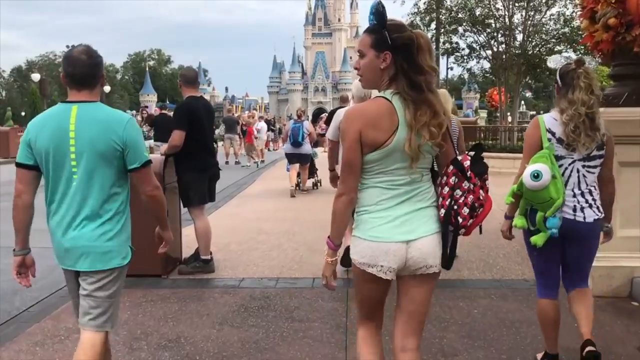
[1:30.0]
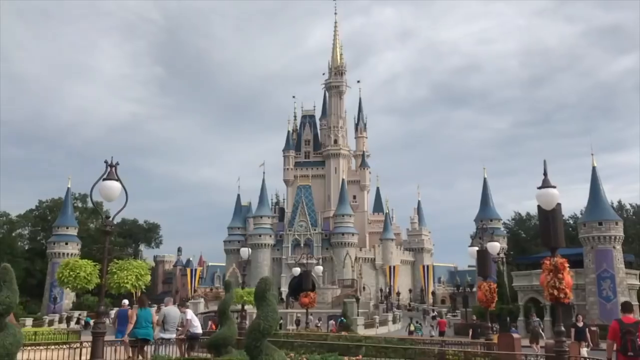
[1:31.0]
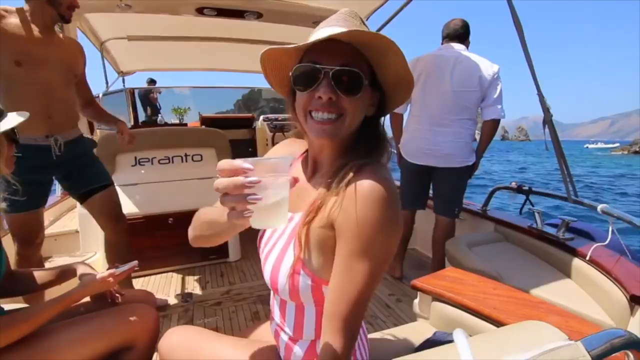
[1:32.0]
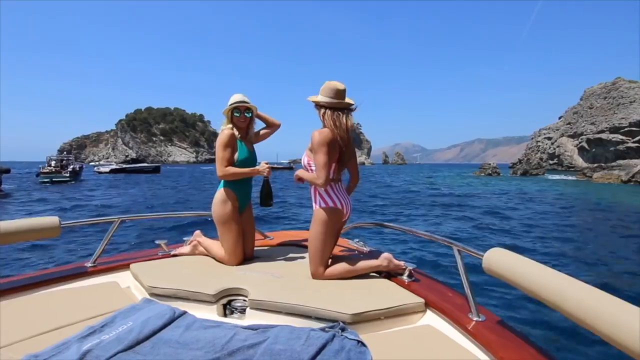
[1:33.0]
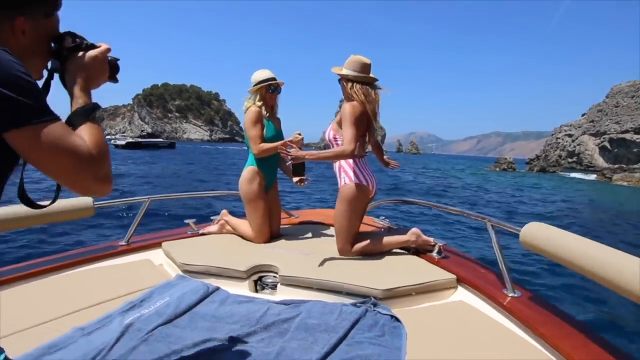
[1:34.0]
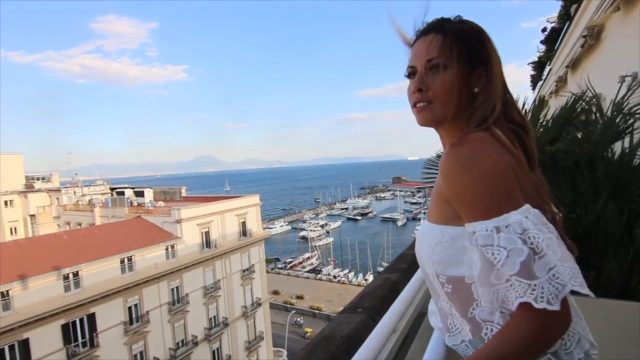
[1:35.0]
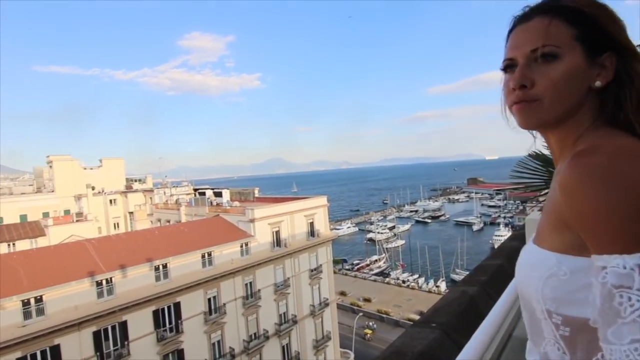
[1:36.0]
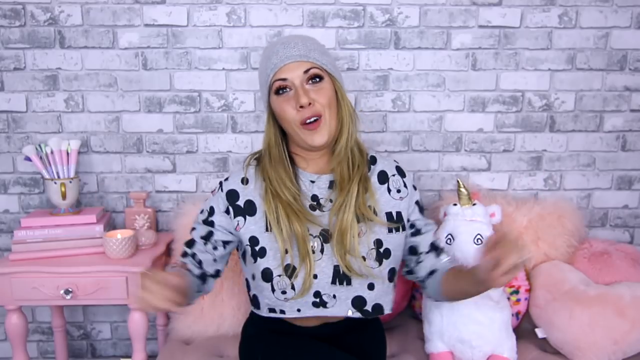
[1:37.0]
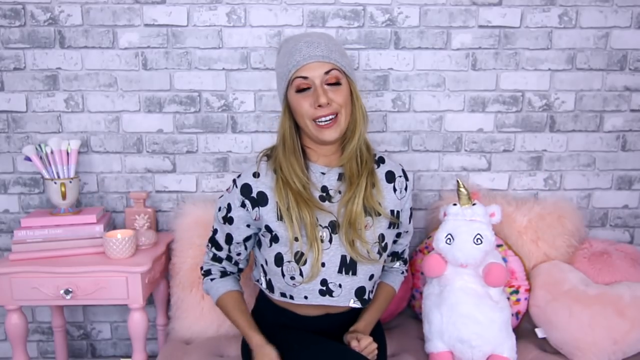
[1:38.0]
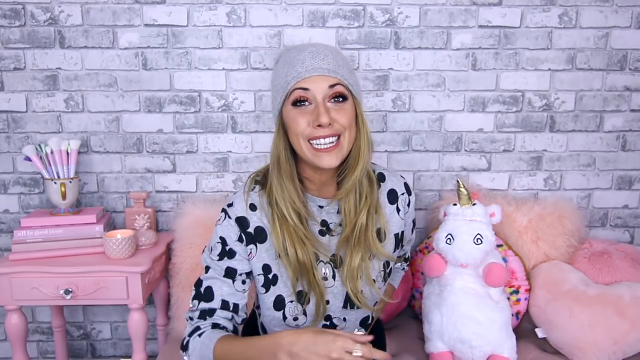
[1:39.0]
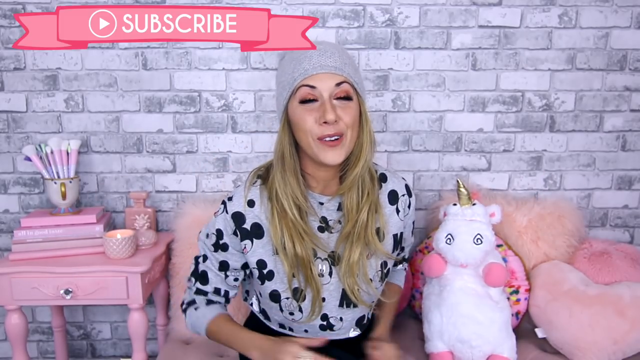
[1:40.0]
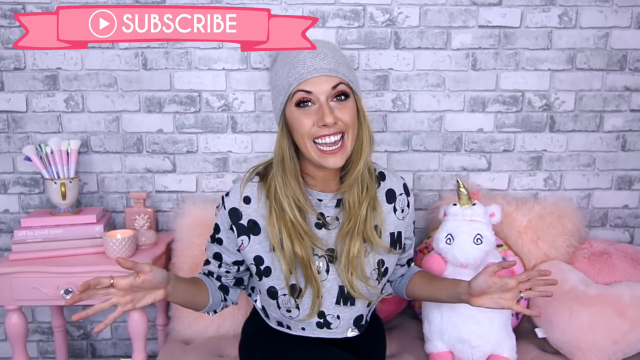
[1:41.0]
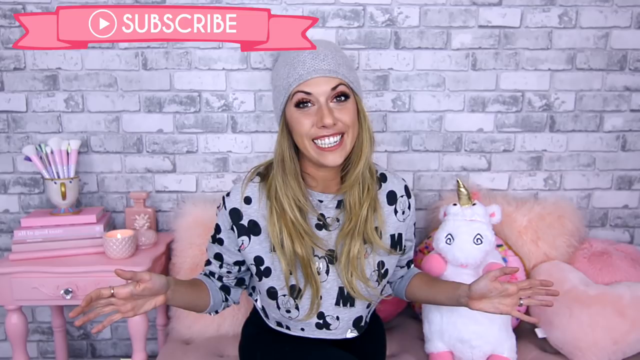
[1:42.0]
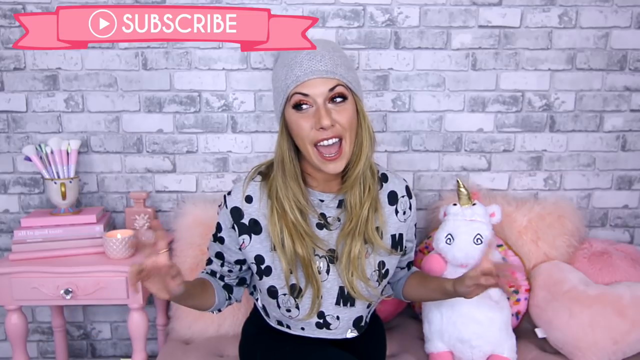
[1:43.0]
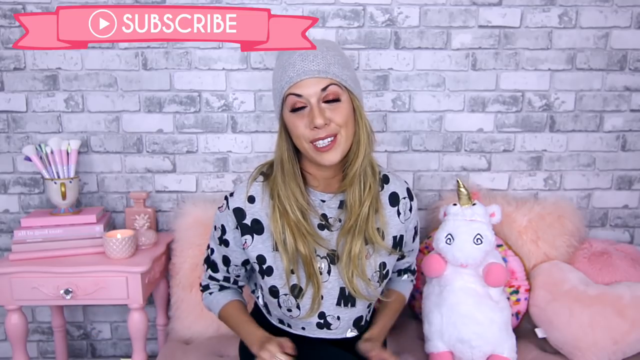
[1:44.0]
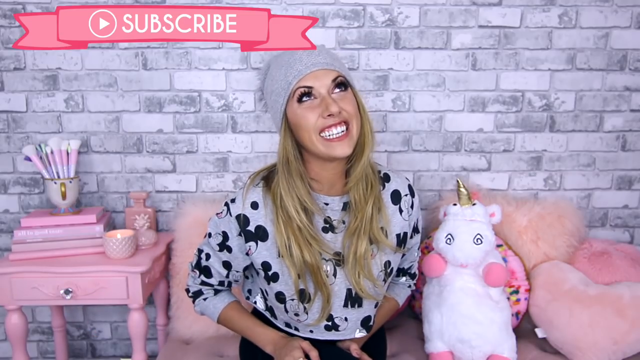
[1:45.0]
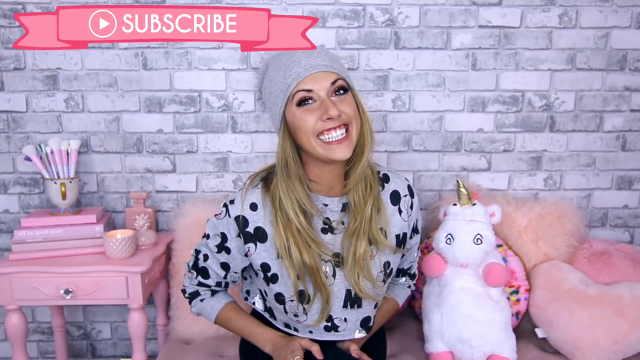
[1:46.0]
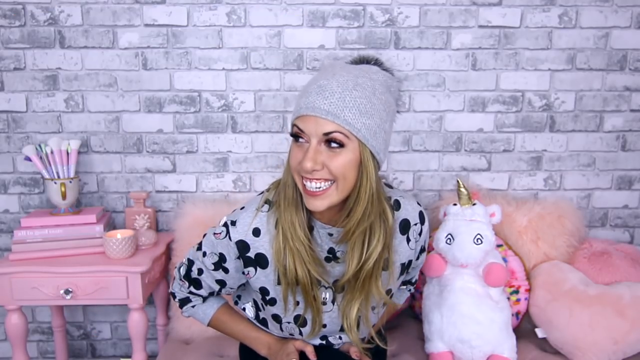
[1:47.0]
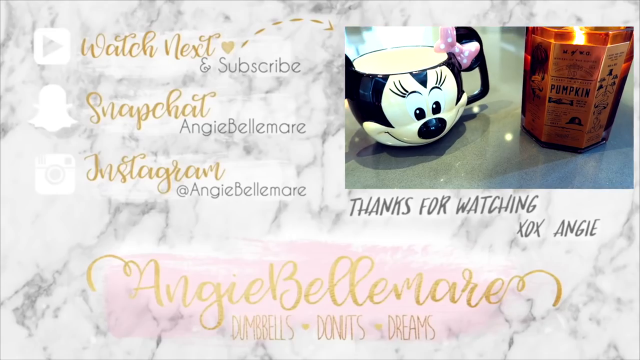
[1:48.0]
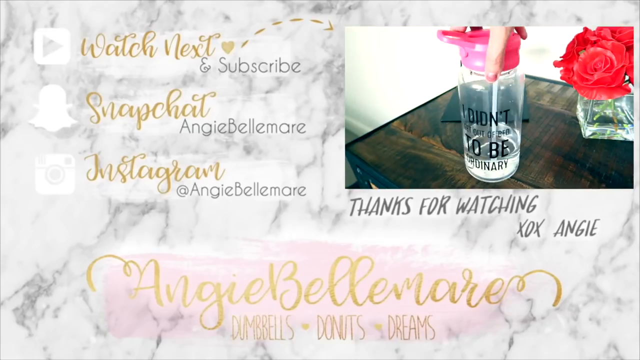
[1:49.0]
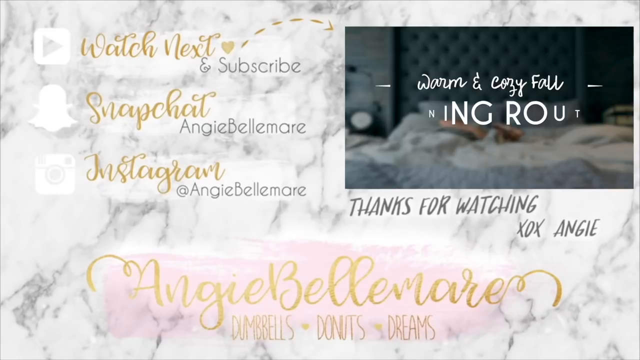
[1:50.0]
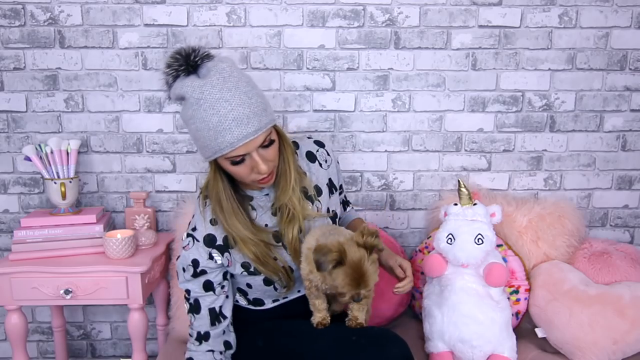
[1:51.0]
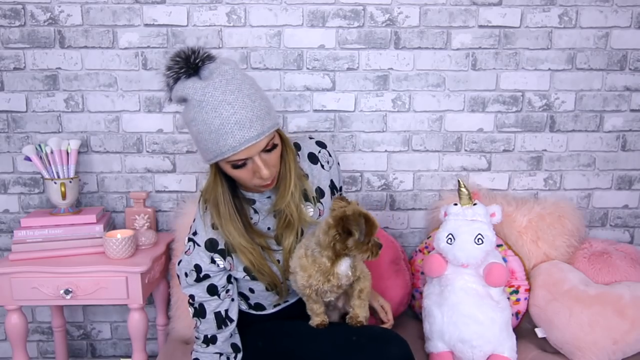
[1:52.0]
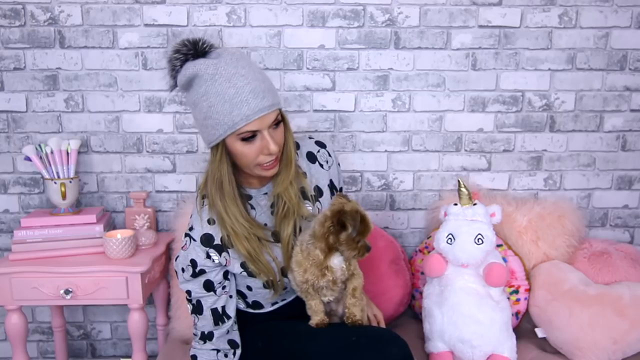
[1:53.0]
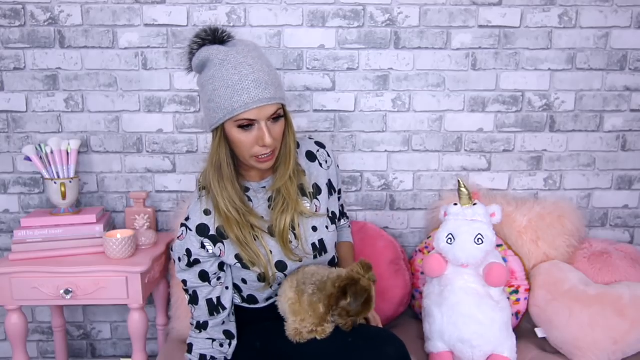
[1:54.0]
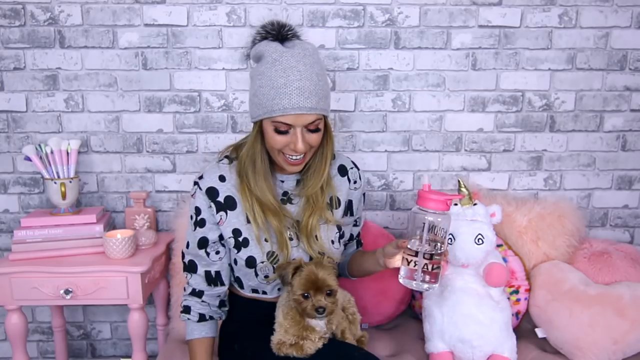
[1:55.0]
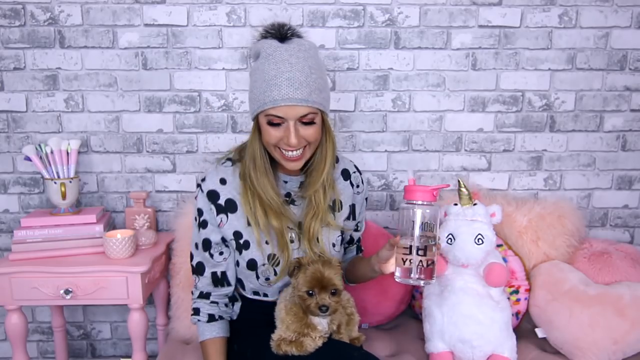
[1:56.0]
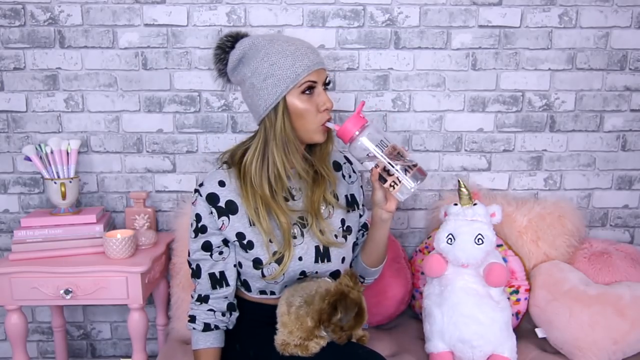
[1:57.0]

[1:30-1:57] A woman wears a sleeveless light teal top that reveals the upper part of her shoulders and back. She carries a small red, white and black bag as she walks on the sidewalk of a busy road. Possibly the same woman sits in a ship with two men and a woman, with blue water and some small hilly mountains in the background. The woman and another woman kneel upwards as a man tries to take their picture. A close-up shows the woman standing on a balcony, with a white building and some ships sitting on the water in the background under a cloudy blue sky. Possibly the woman then sits on a pink sofa in a largely pink-themed room in front of a brick wall design, talking to the camera. She wears a light grey hat and a grey top with a dog-like design on it, and she stretches her hands and gesticulates with them as she smiles and talks. The text "Subscribe" appears on a pink-themed graphic in the top left corner of the screen. Next, a screen with a marble background shows some golden and grey text. In the top right corner is an embedded video showing some greenery, then a feeding bottle, and later some white text appearing over a background showing somebody lying in a bed in a bedroom. The woman is shown again holding a small dog, sitting on a pink sofa and drinking water from a water bottle with a pink lid.